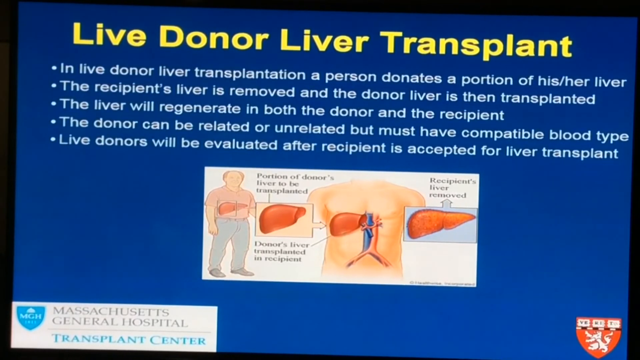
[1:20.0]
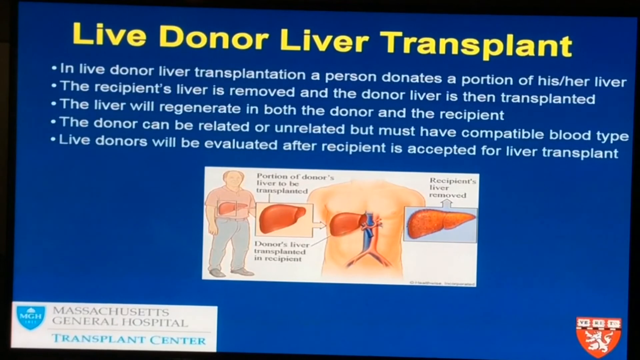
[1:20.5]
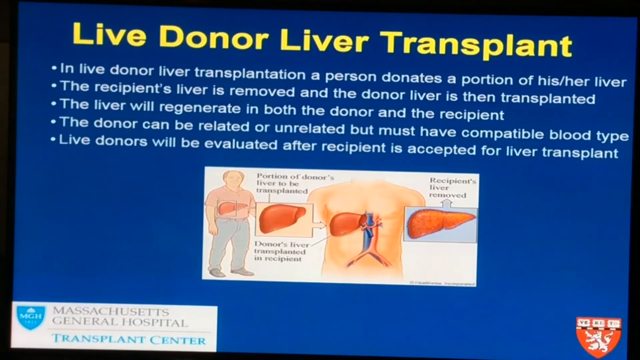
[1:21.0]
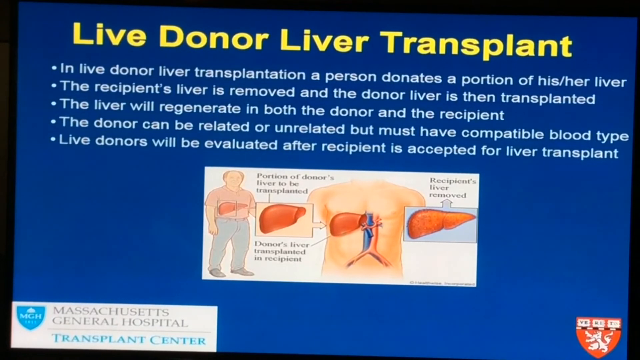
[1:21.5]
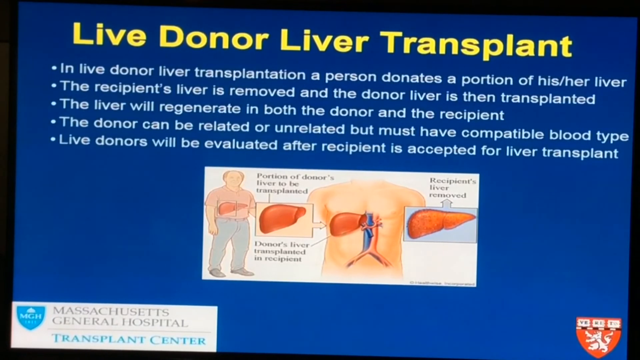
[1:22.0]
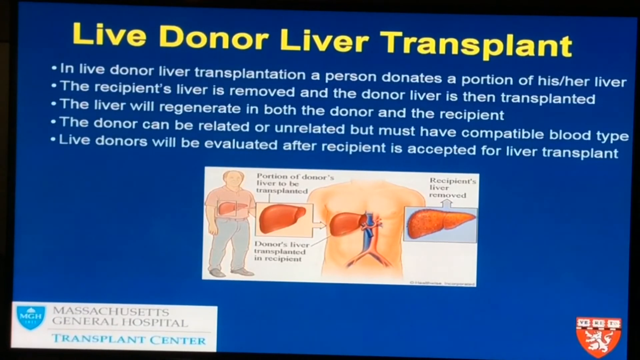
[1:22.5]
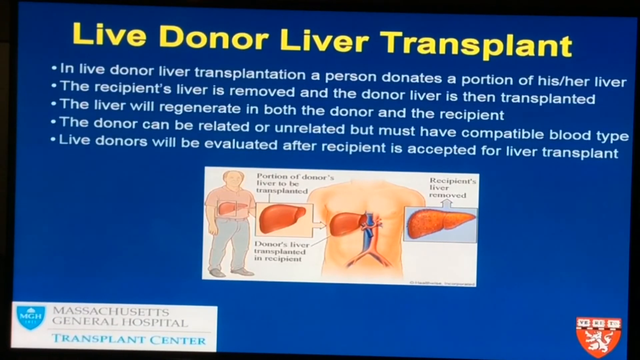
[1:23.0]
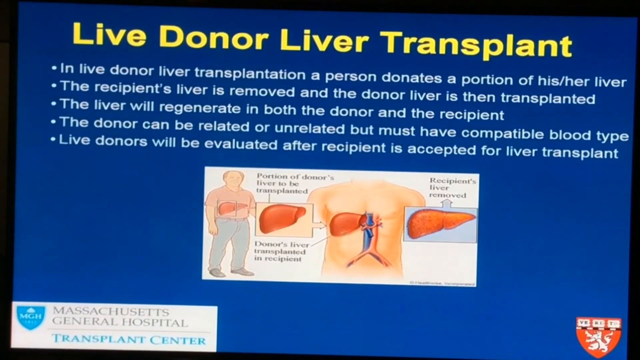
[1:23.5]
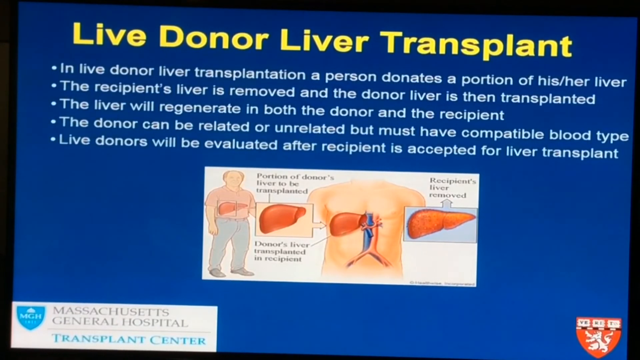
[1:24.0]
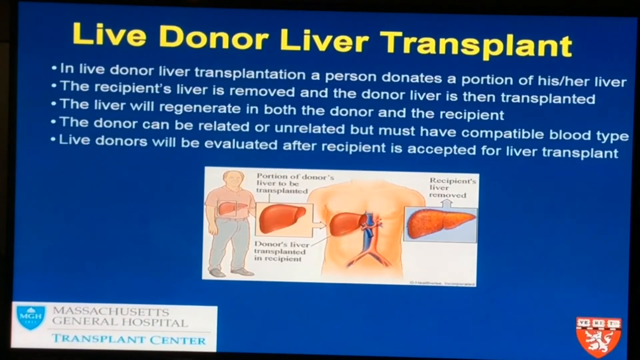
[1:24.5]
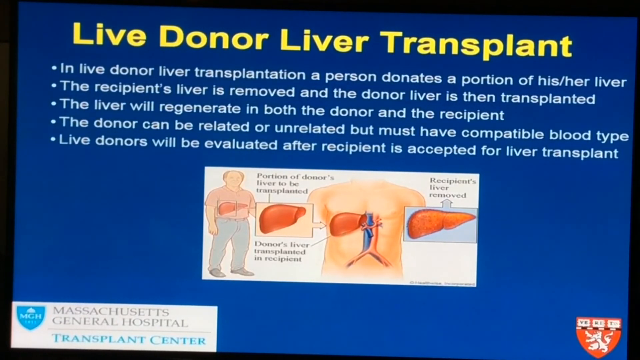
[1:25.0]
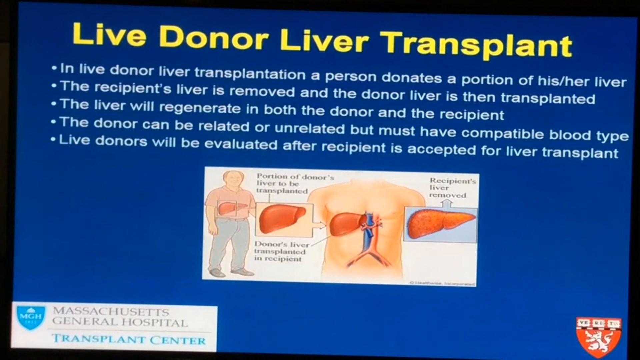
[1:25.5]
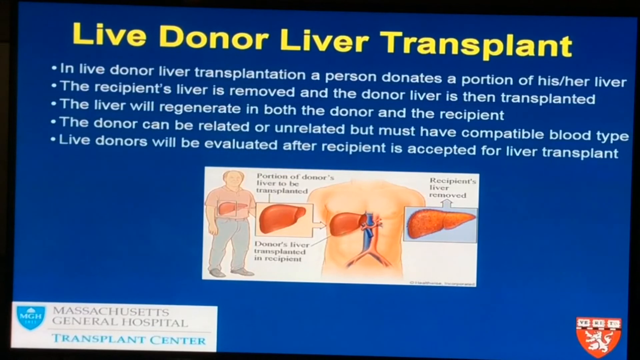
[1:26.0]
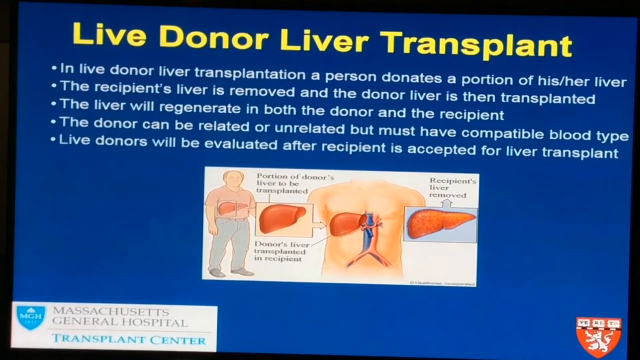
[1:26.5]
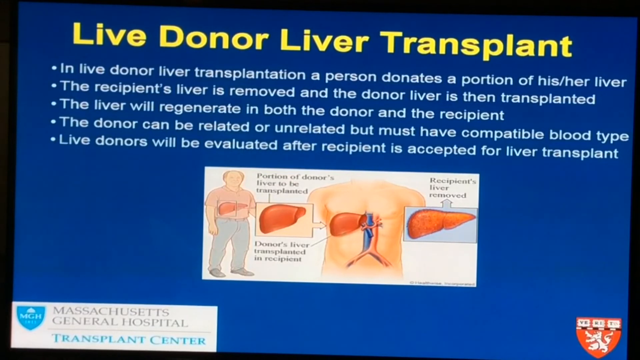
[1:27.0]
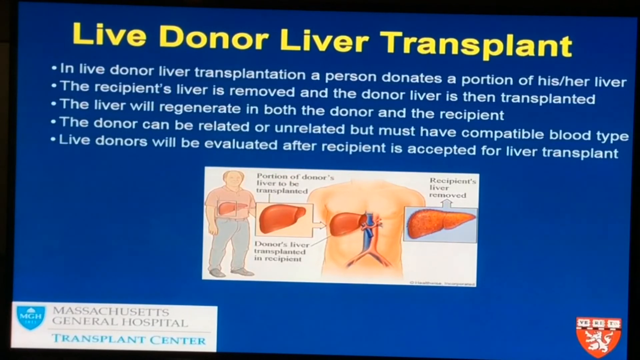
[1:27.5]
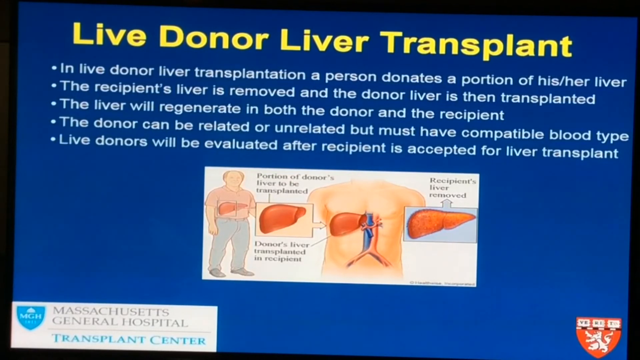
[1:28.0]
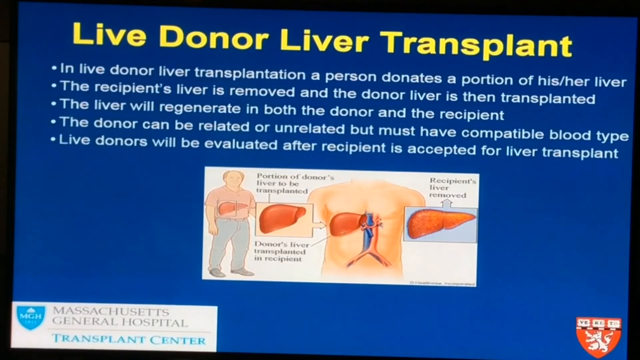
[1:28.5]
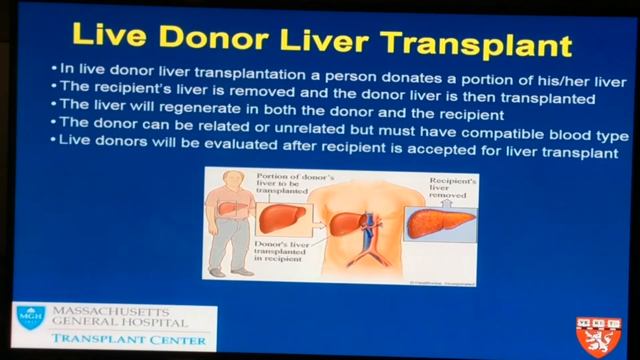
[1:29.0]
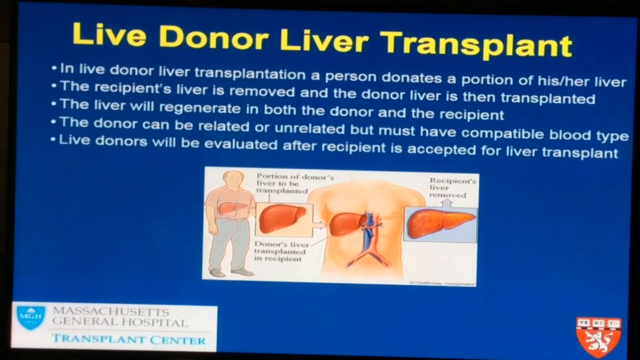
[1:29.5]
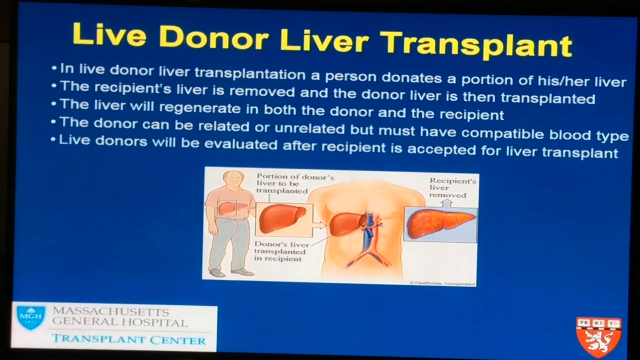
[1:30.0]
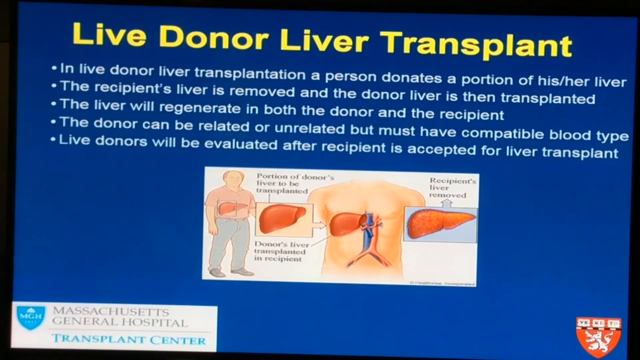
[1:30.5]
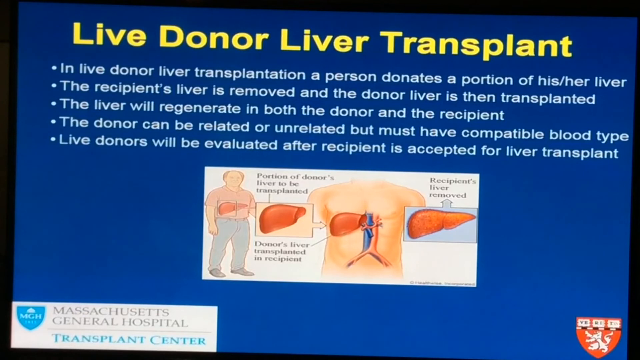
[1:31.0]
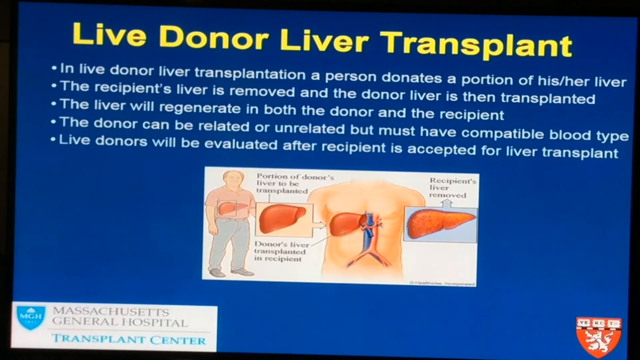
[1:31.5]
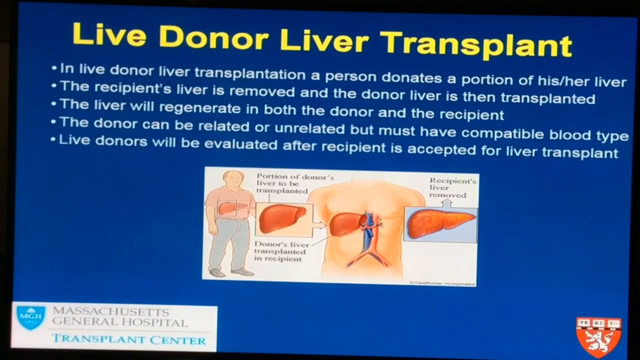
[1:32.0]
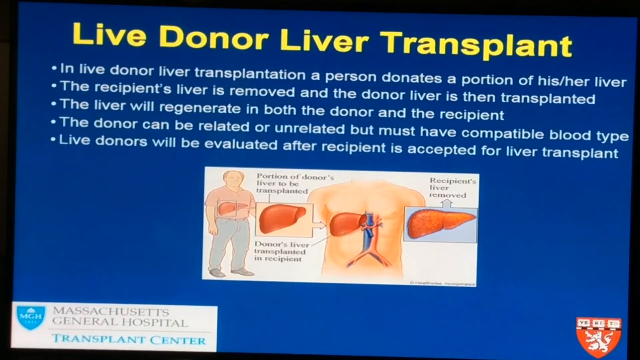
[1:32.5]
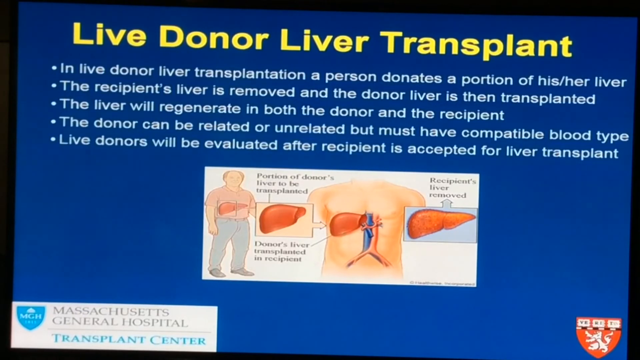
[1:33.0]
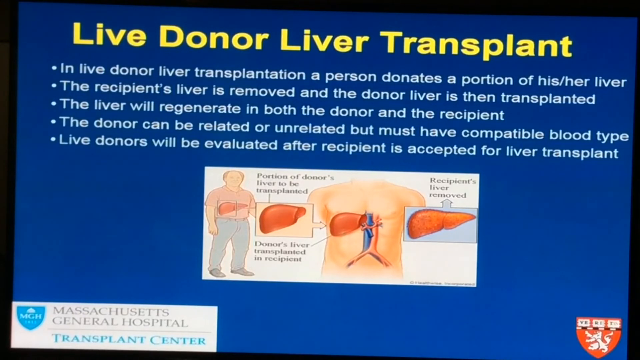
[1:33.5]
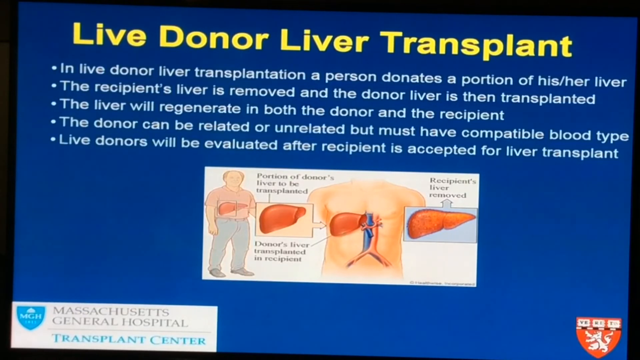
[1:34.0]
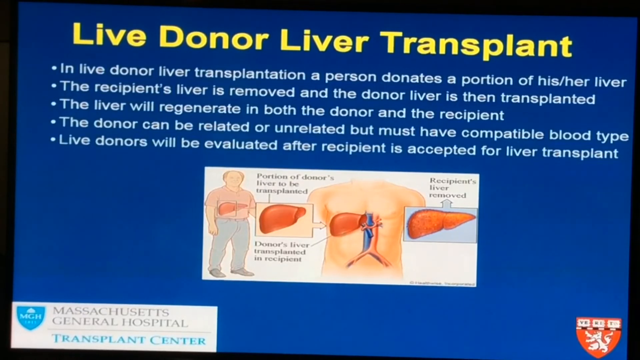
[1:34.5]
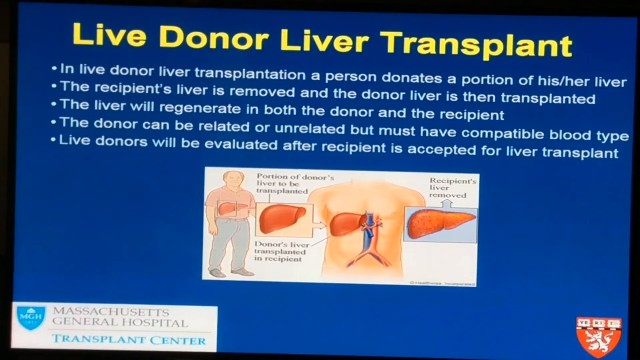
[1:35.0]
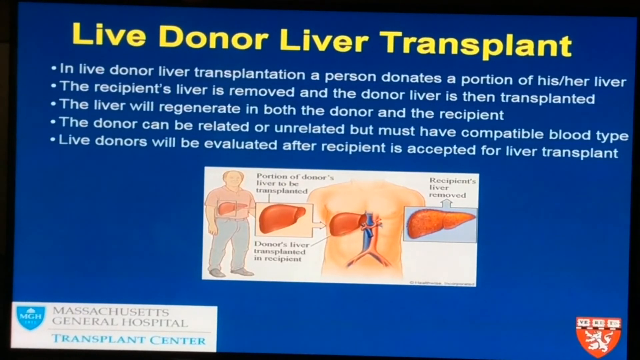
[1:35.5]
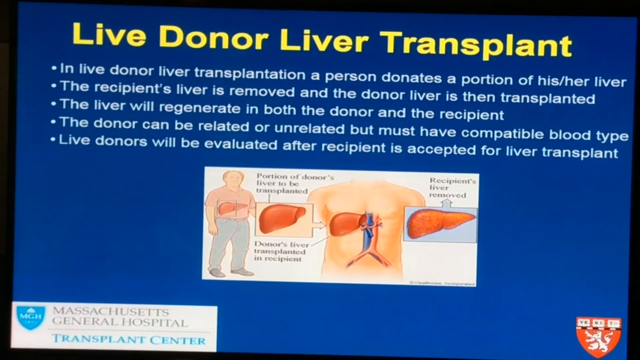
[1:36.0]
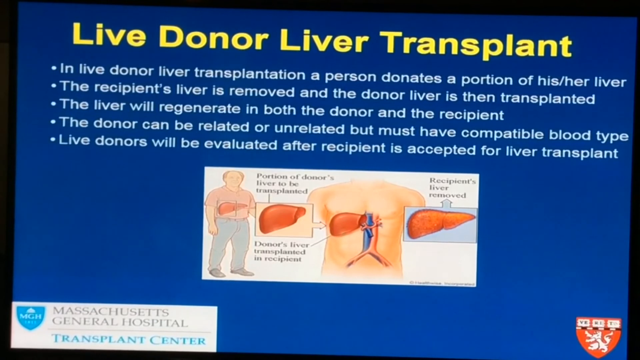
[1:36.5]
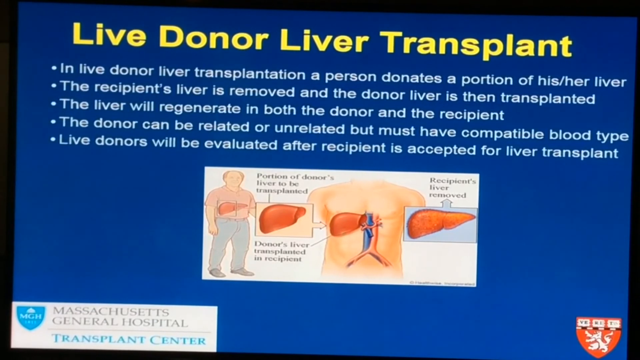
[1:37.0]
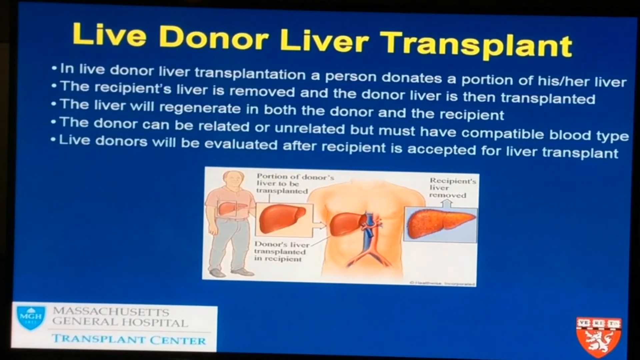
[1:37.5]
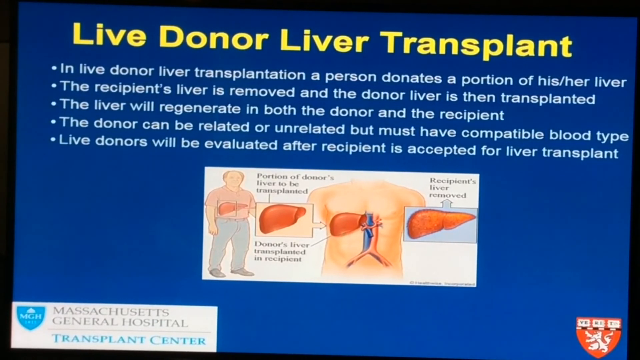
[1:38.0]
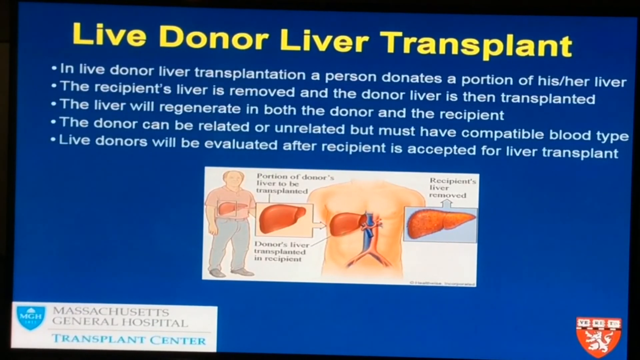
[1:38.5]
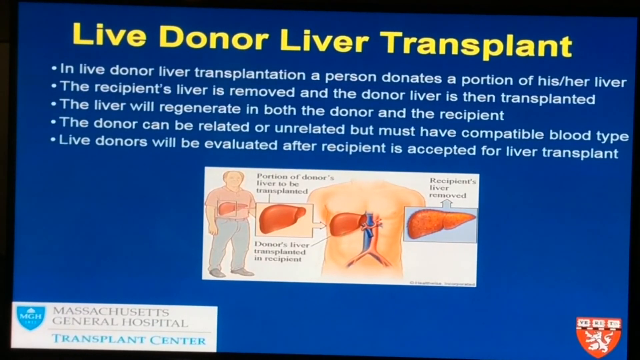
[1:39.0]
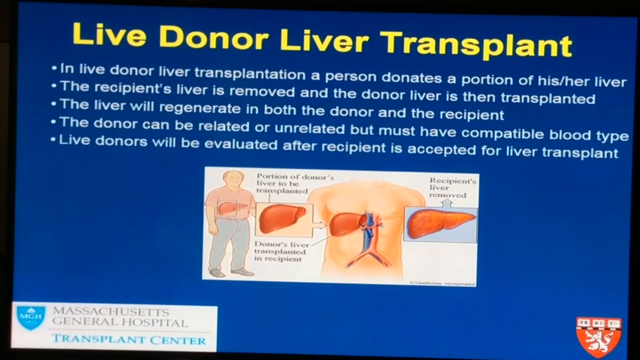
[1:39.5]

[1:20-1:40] A blue screen has yellow letters at the top reading "live donor liver transplant". Slightly to the left of the L in "live" and below it, five white dots run down, each with a sentence to its right, reading from top to bottom: "in live donor liver transplantation a person donates a portion of his or her liver"; "the recipient's liver is removed and the donor liver is then transplanted"; "the liver will regenerate in both the donor and the recipient"; "the donor can be related or unrelated but must have compatible blood type"; and "live donors will be evaluated after recipient is accepted for liver transplant". Below that is a white rectangular banner whose top and bottom are much longer than its left and right sides. On the left side is a man in a pink shirt and blue pants, his liver visible through his shirt. In the center is a shirtless man with a liver on the left side of him, underneath his right pectoral. A blue blood vessel runs down, and to the right of it a red blood vessel goes down. There is a depiction of a liver to the left of this abdomen and a picture of a liver to the right, with writing above and below the picture on the left and writing above the picture on the right.